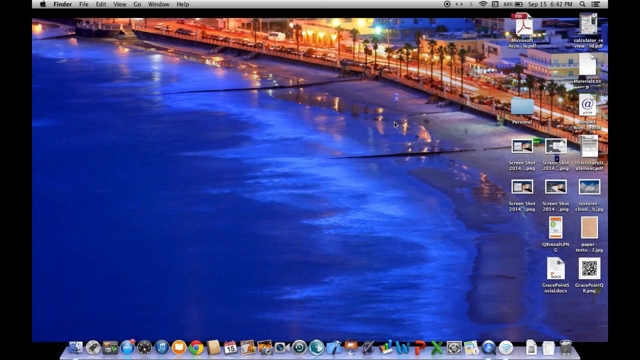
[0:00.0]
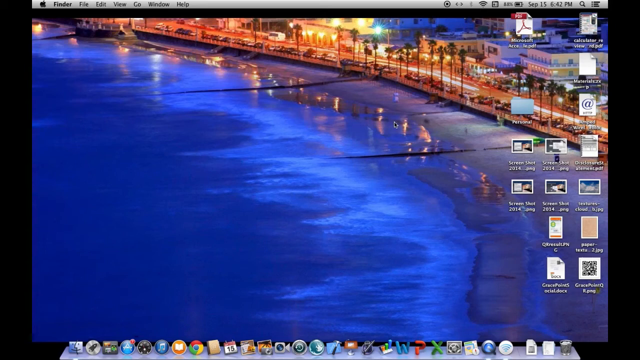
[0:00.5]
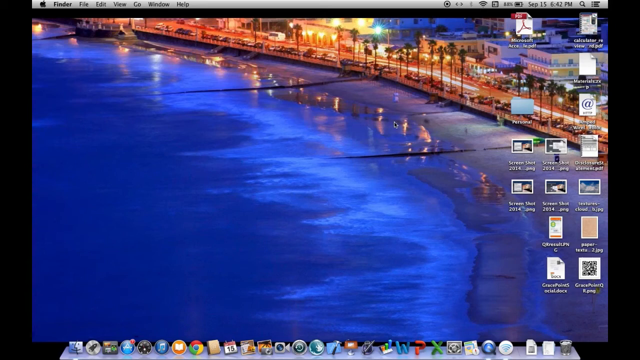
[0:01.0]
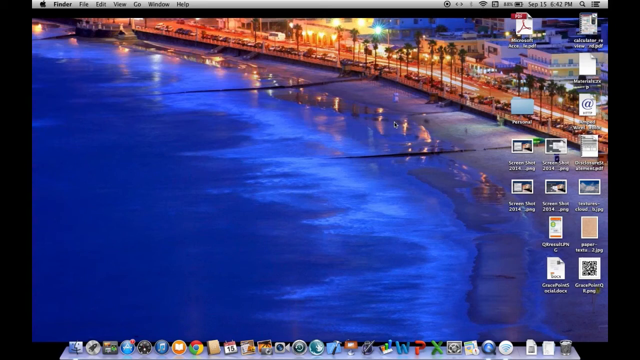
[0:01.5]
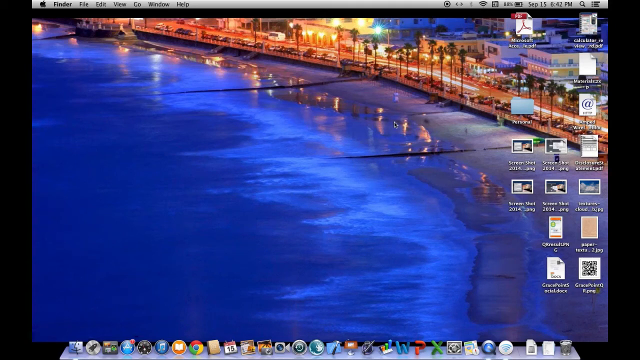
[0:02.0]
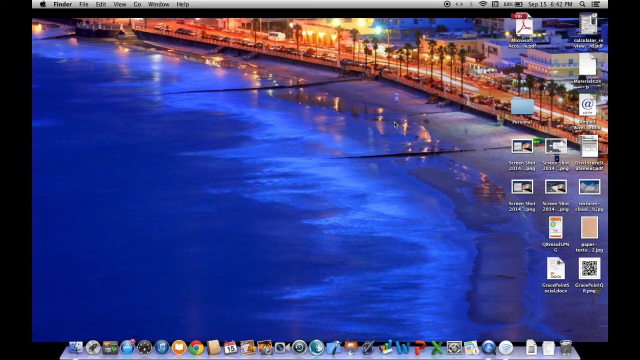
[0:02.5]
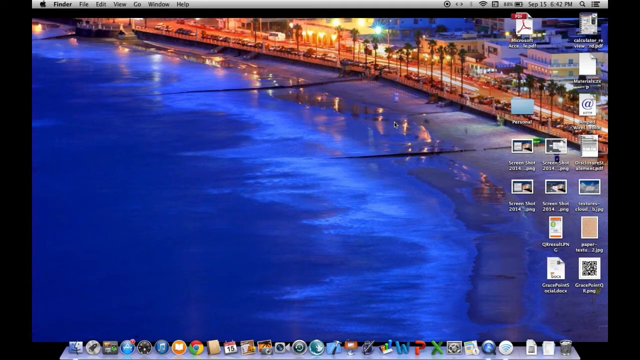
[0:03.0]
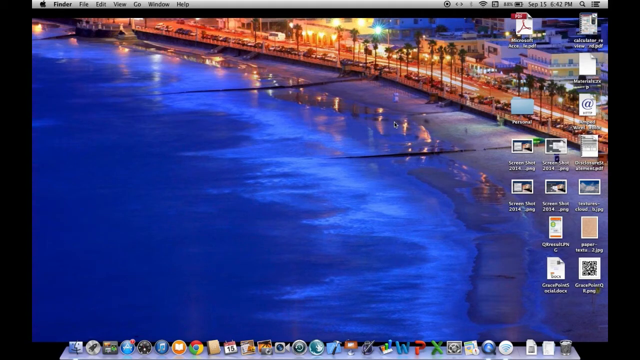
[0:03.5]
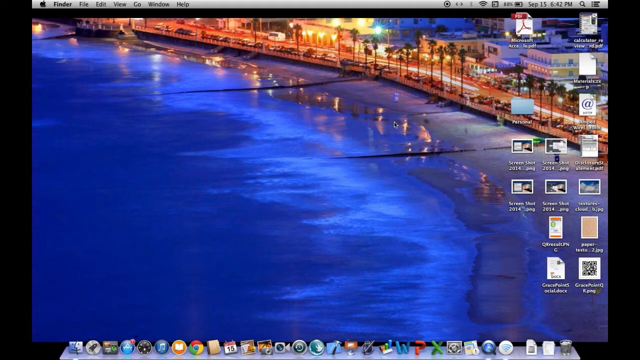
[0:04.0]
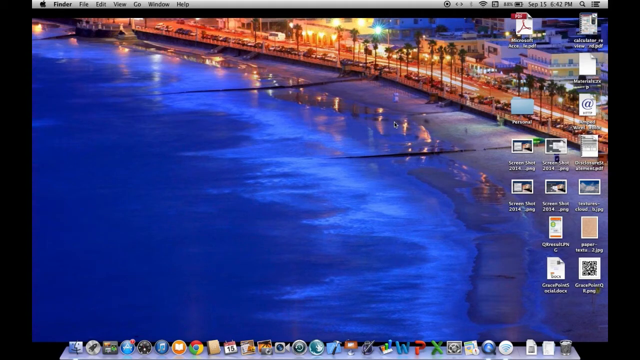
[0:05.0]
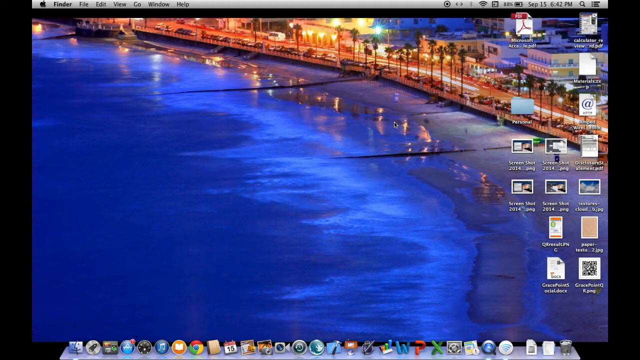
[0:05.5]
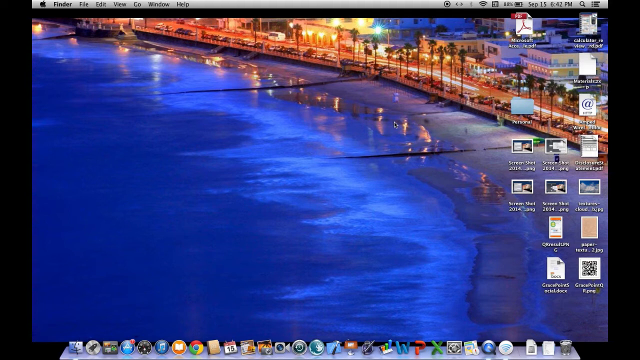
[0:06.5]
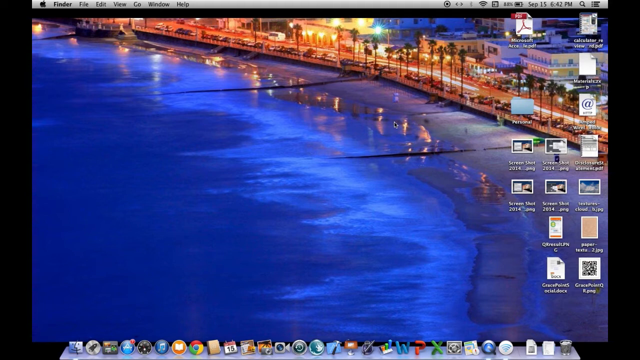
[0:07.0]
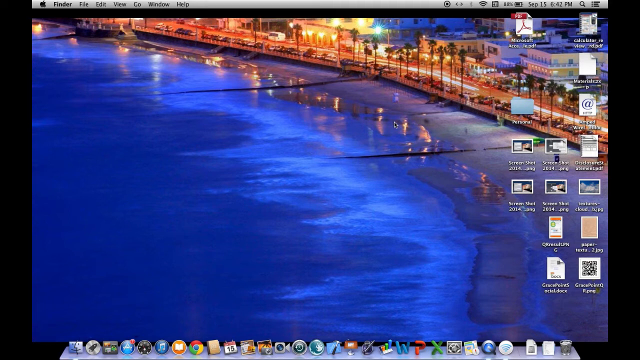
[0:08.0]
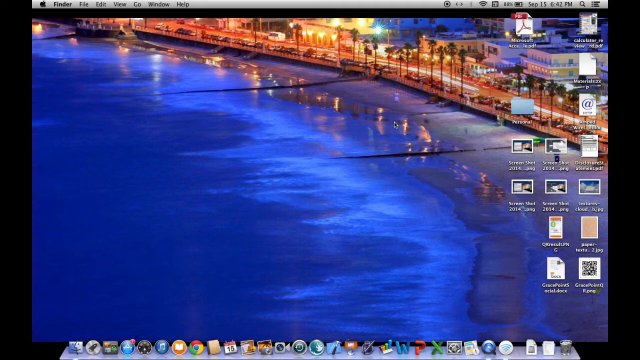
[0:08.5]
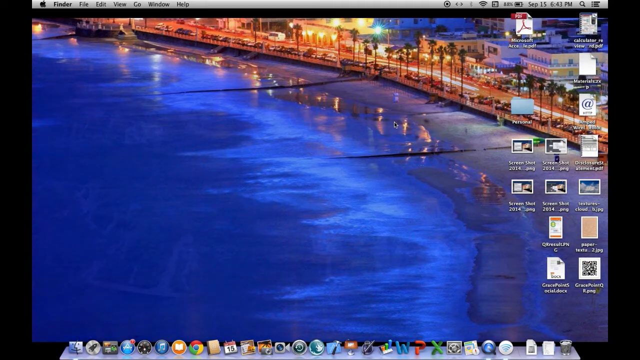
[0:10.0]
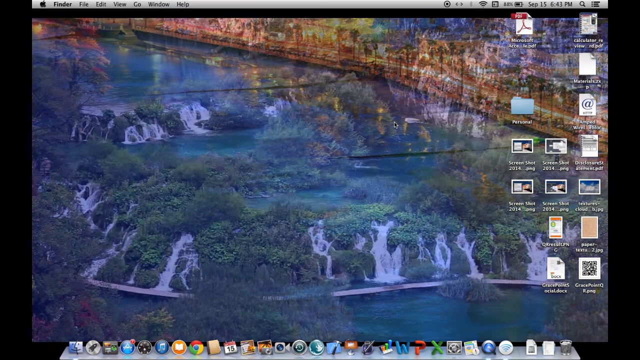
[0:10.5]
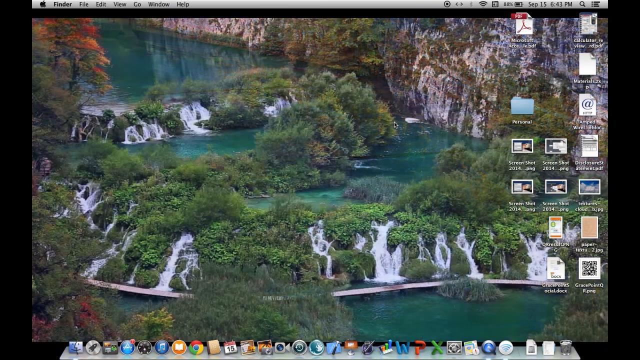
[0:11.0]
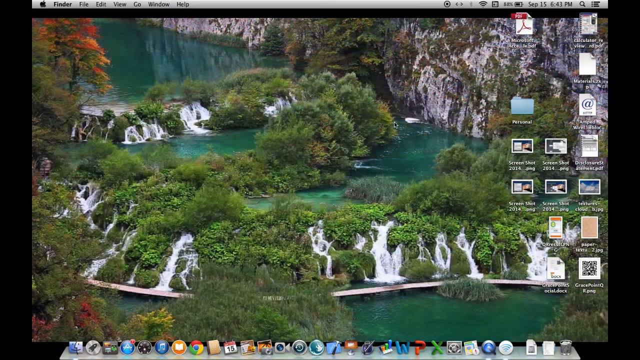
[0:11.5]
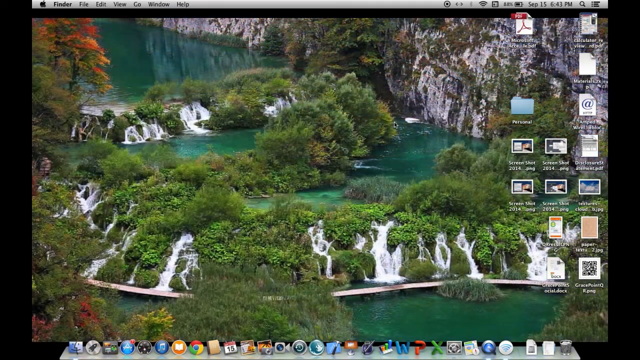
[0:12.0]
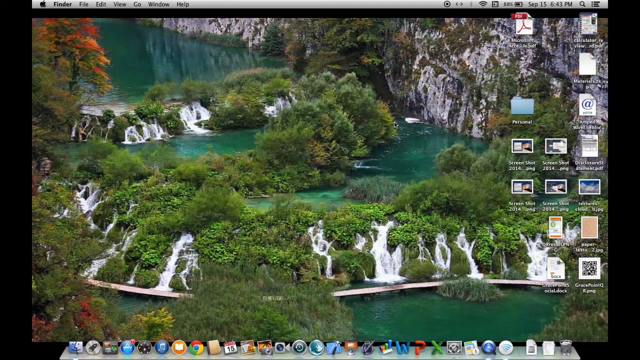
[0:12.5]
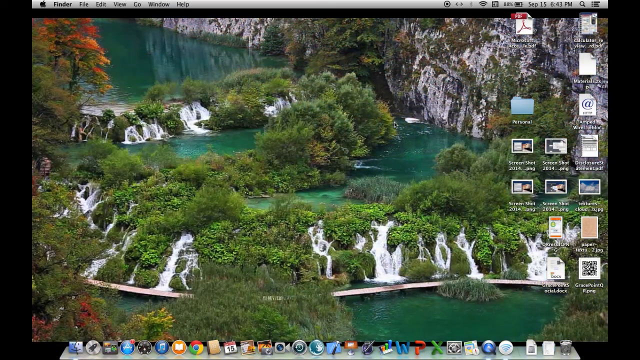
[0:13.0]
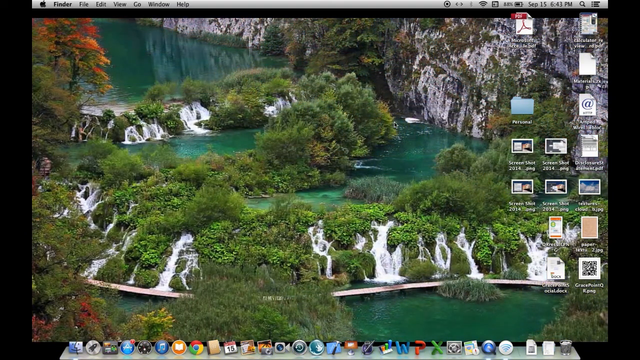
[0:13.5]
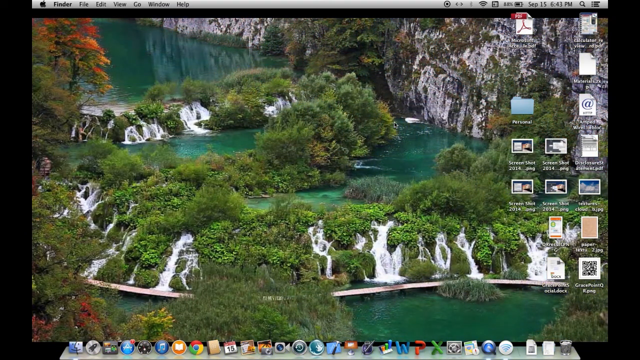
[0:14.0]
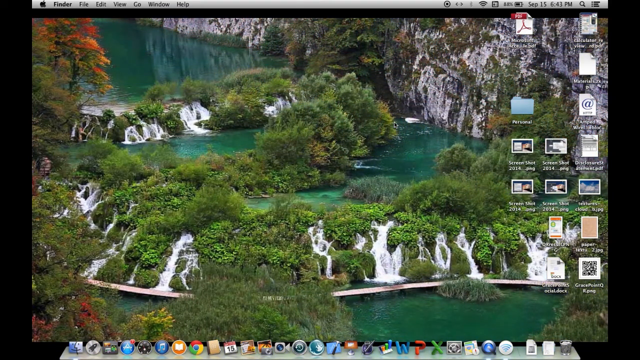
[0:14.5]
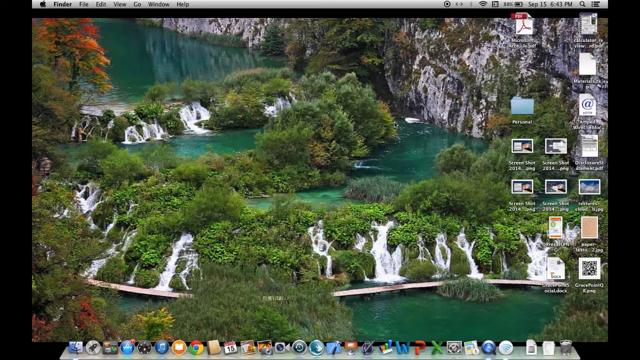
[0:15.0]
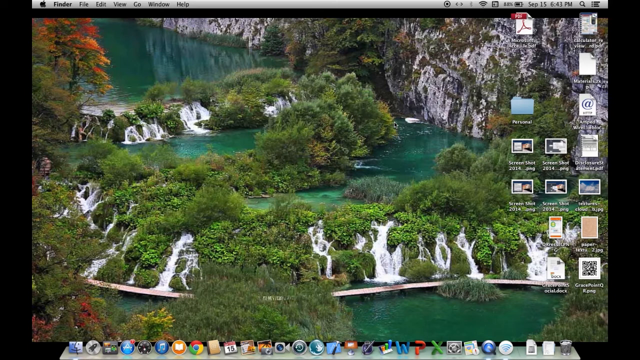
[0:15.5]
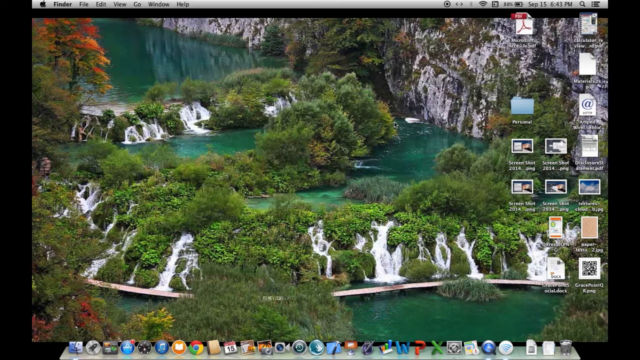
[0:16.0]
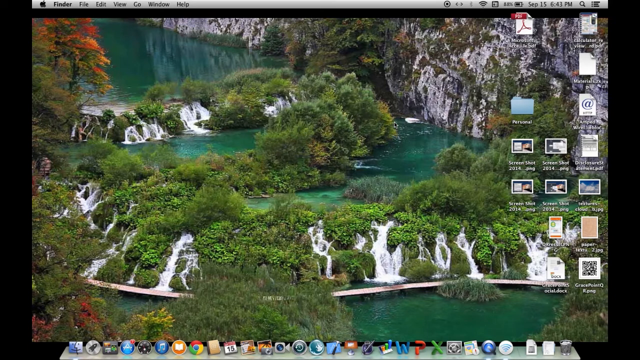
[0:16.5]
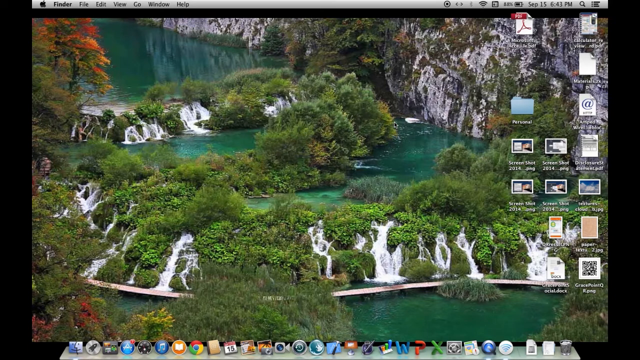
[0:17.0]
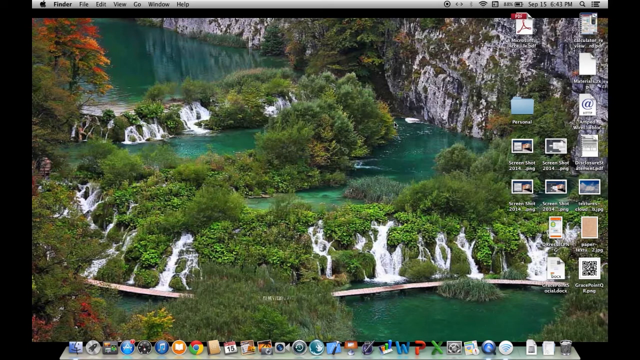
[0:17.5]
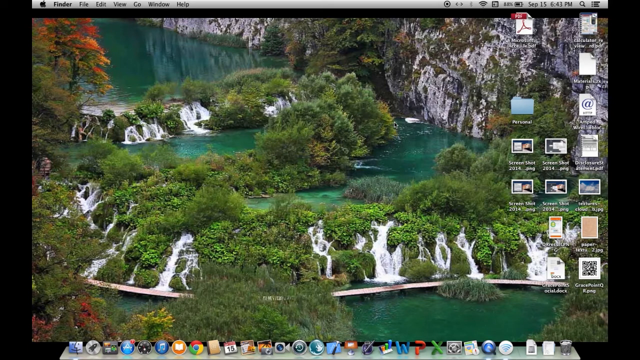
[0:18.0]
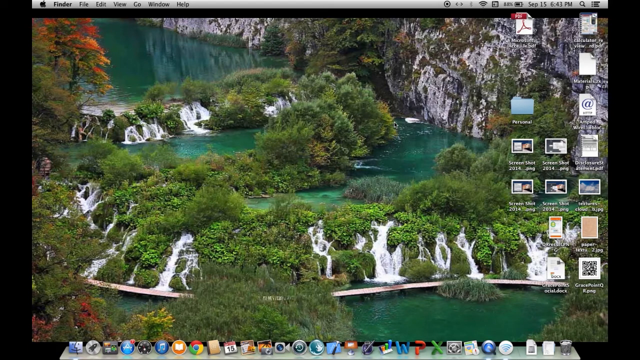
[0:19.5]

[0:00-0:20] A screen recording shows someone's laptop or computer desktop with a scenic background picture and a large number of items pinned to the taskbar, including Google Chrome and a calendar. The apps are moved to the right side of the screen. The background switches to another picture of a waterfall with green water, bushes, rocks and more waterfalls, then back to the first picture, and then back again, so the background alternates between just two pictures, apparently as a kind of screensaver-style background while the apps stay visible.